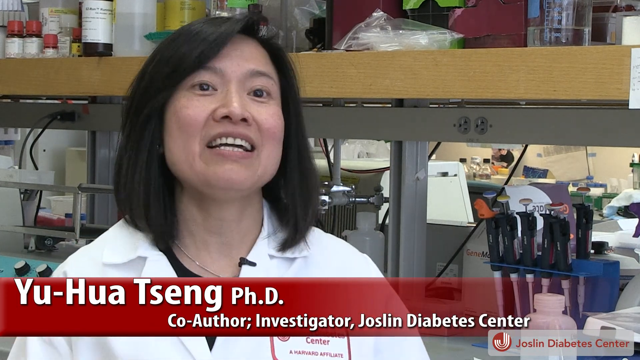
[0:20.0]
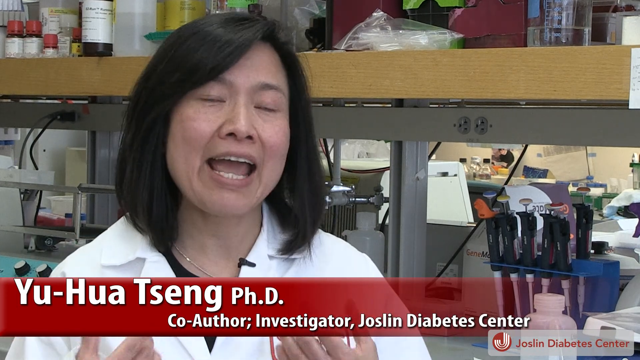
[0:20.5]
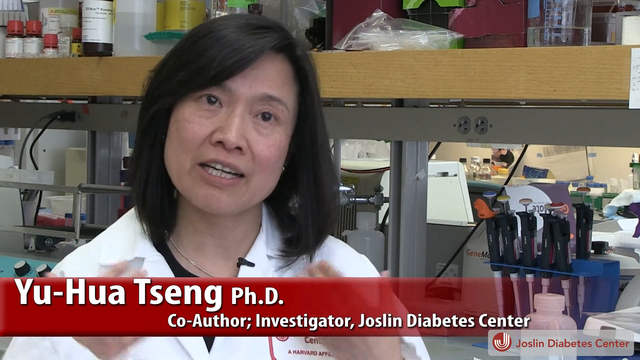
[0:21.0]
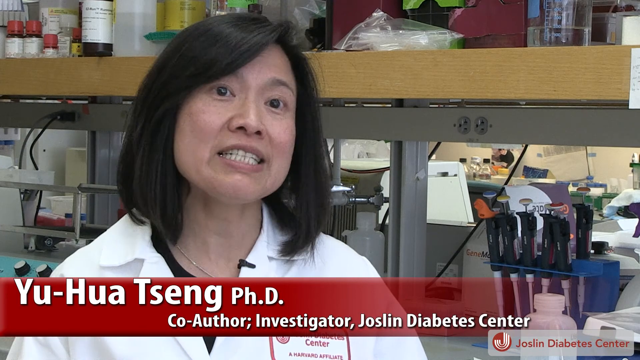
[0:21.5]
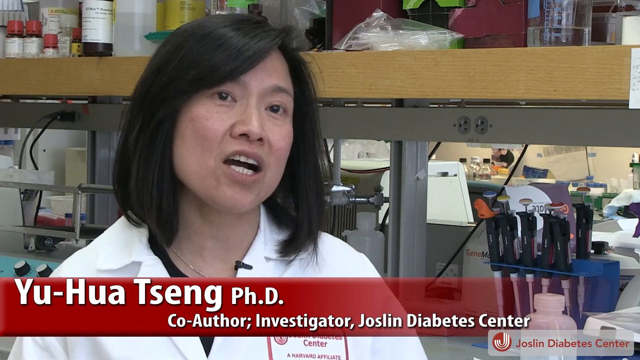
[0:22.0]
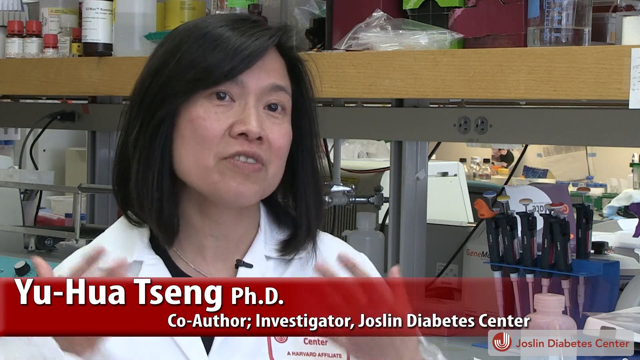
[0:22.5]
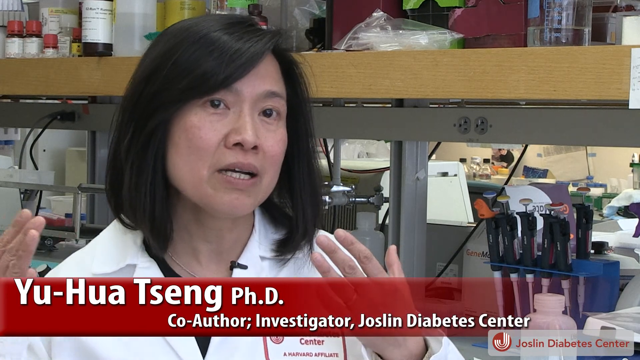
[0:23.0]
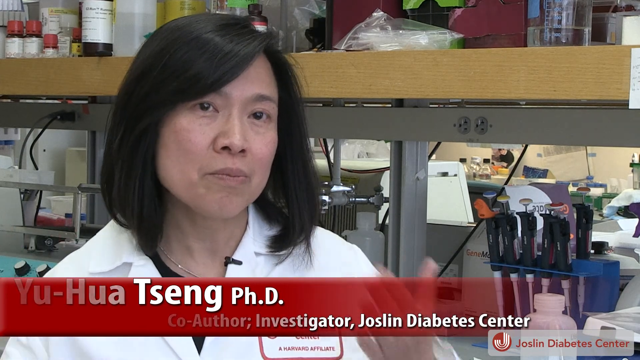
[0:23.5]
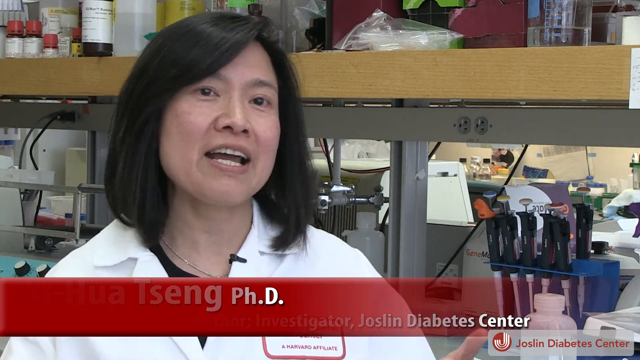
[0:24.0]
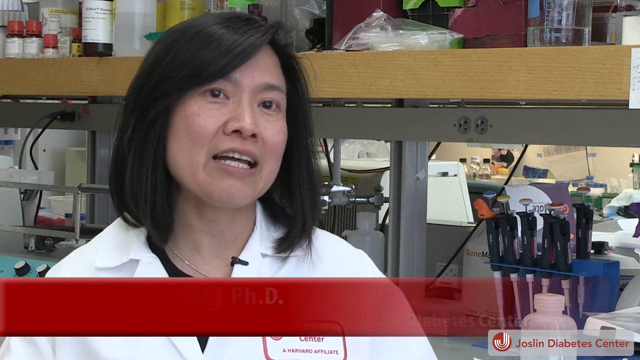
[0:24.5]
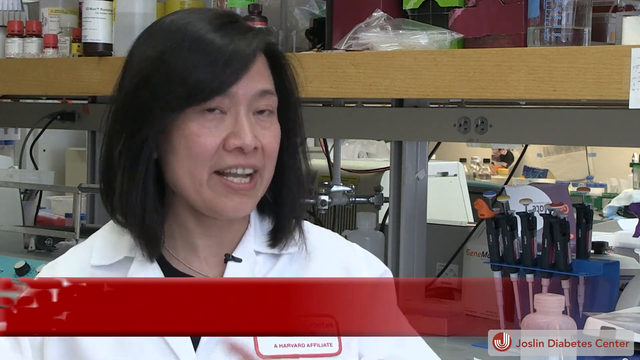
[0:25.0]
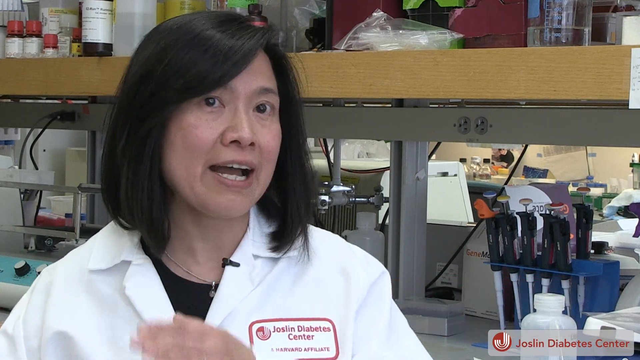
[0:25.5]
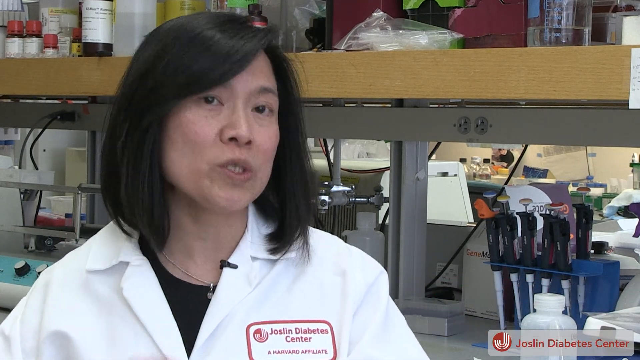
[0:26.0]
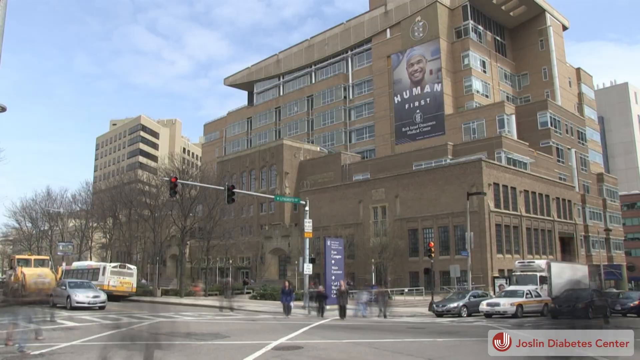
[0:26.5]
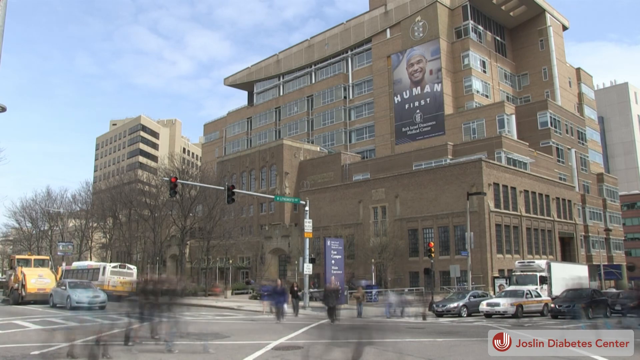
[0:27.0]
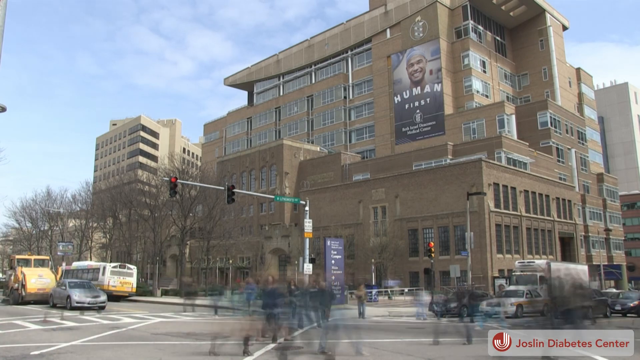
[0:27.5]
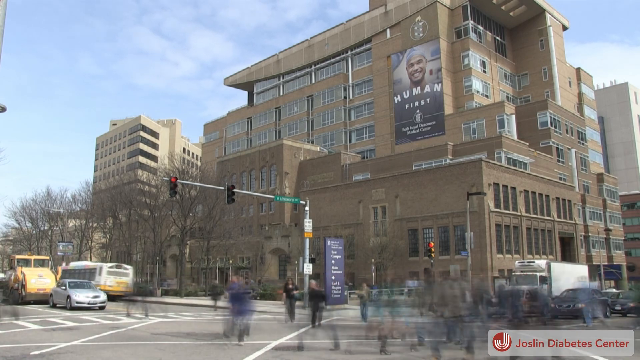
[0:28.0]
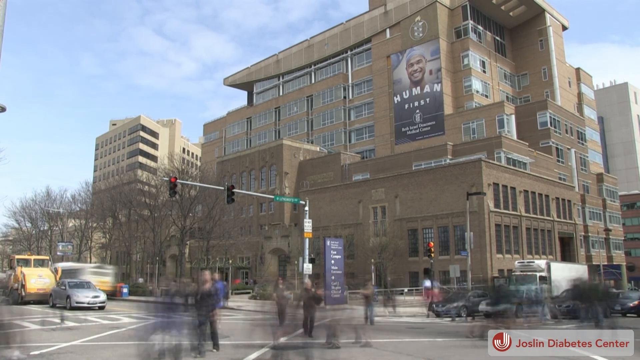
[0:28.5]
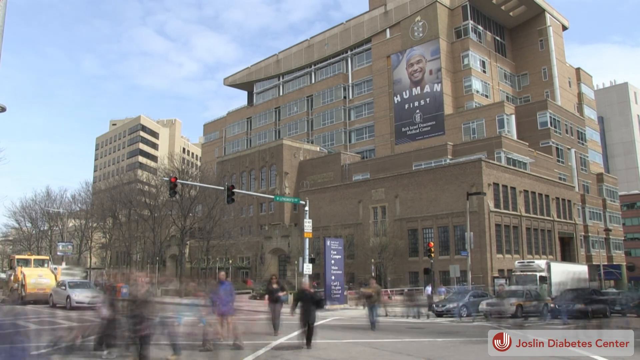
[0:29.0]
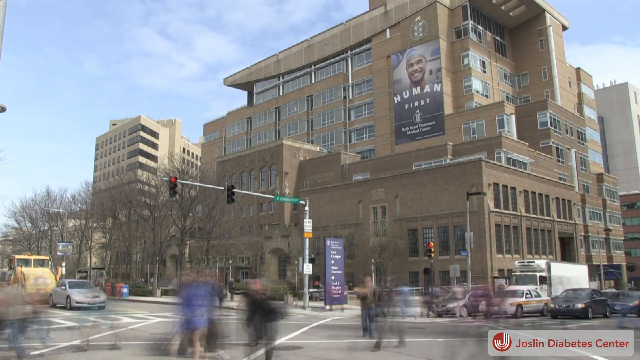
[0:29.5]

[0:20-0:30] Yu-Hua Tseng, PhD, the co-author and investigator at the Joslin Diabetes Centre, is interviewed. She speaks quite enthusiastically, gesturing with both hands as she talks. The video then cuts to the outside of a light brown, multi-storey building with many windows. There is some signage on and outside the building, as well as a white, medical-related symbol as a logo on the building. The view is taken from a street intersection with traffic lights, where pedestrians cross the road; judging by how fast the pedestrians move, it appears to be a time-lapse.